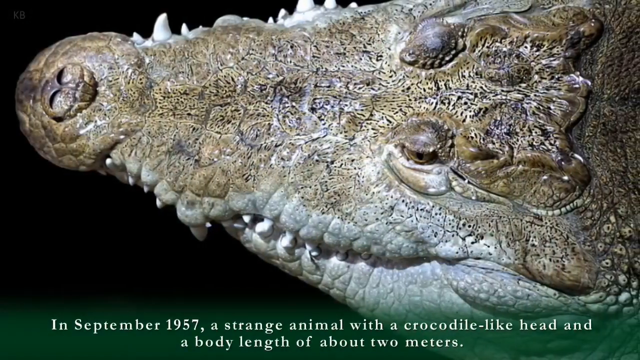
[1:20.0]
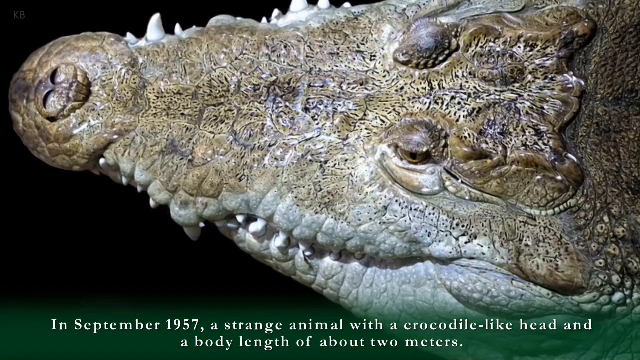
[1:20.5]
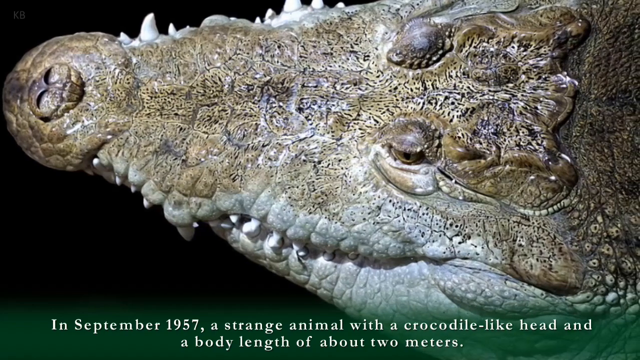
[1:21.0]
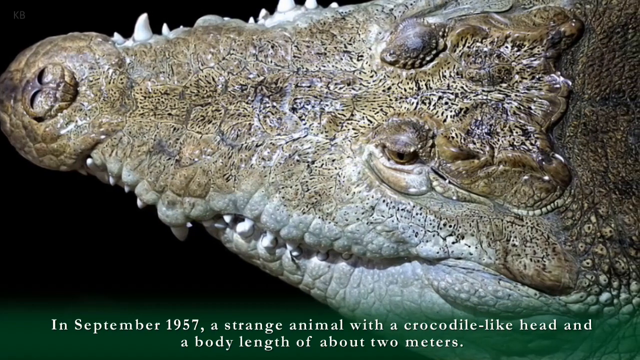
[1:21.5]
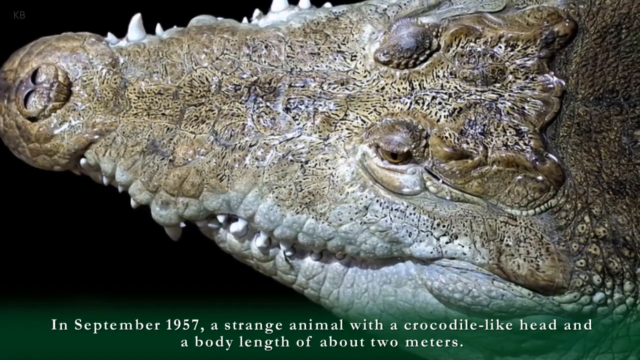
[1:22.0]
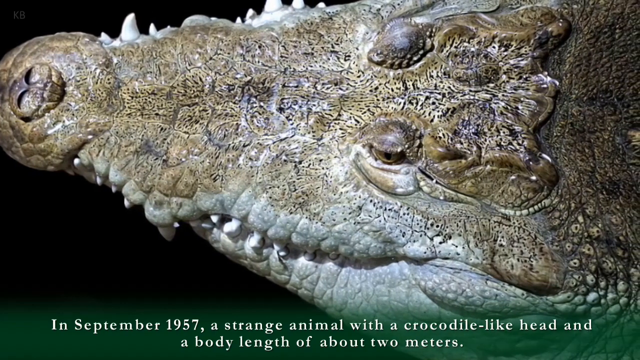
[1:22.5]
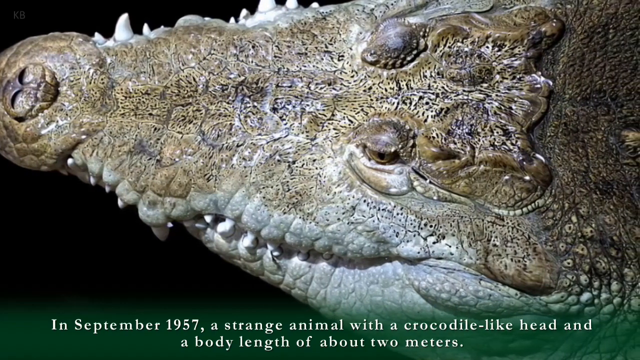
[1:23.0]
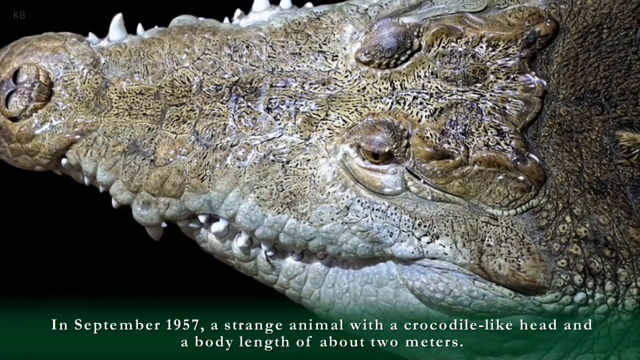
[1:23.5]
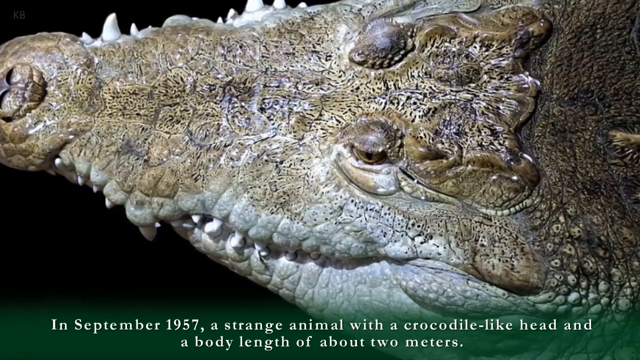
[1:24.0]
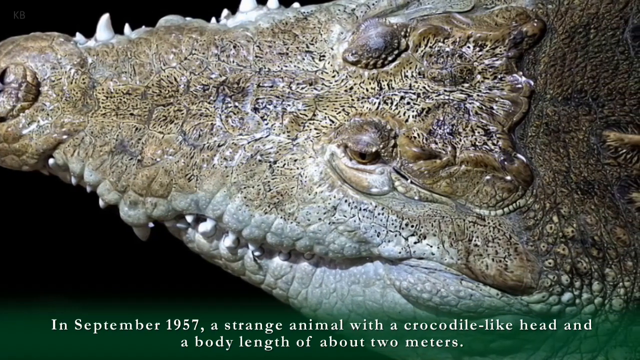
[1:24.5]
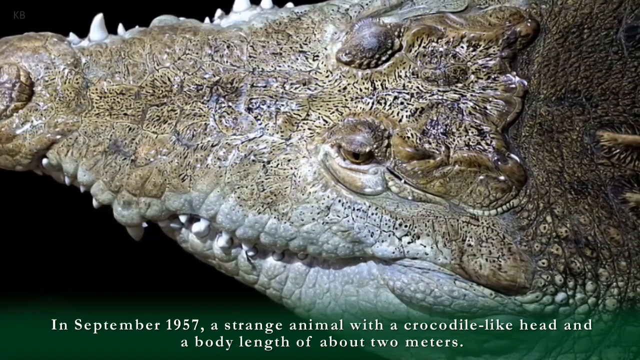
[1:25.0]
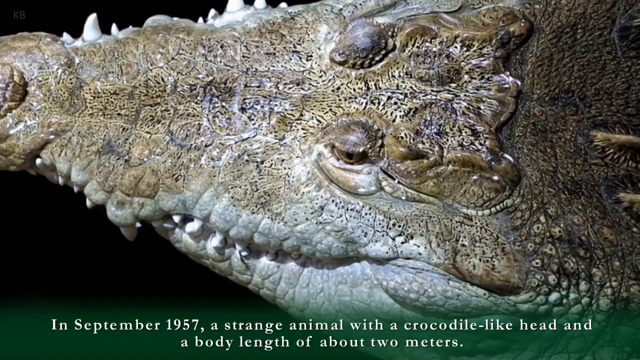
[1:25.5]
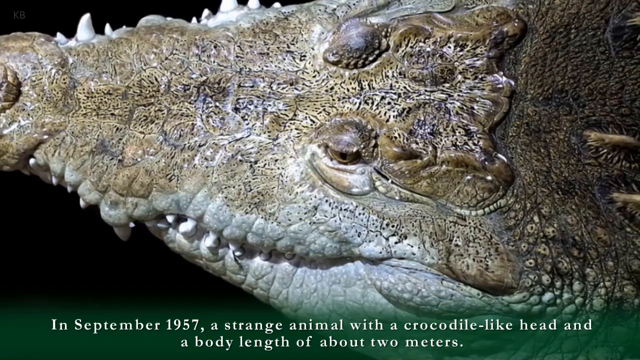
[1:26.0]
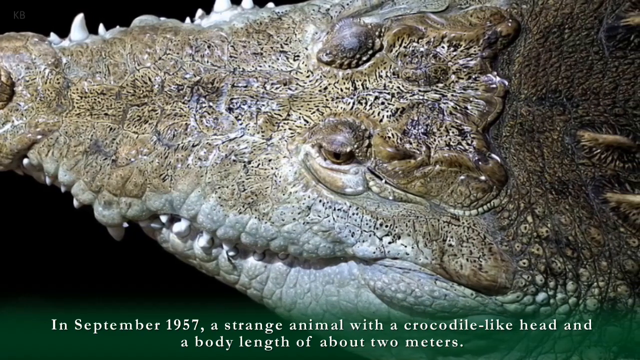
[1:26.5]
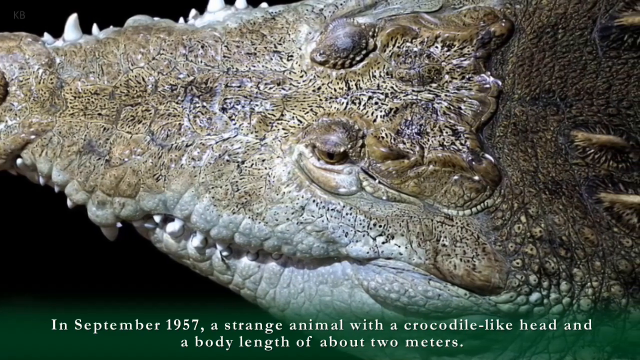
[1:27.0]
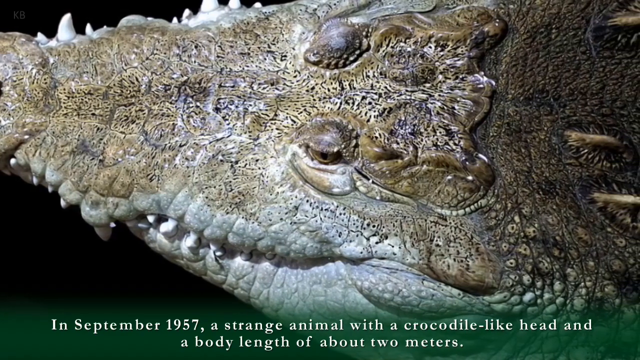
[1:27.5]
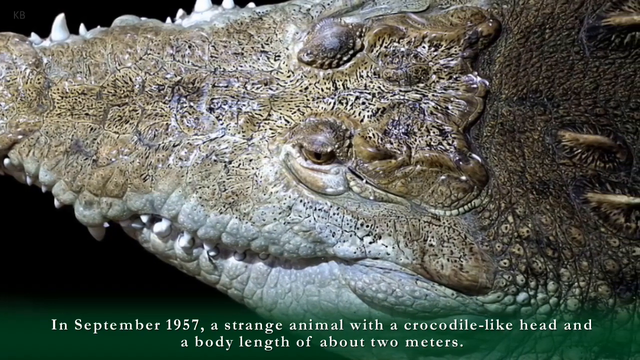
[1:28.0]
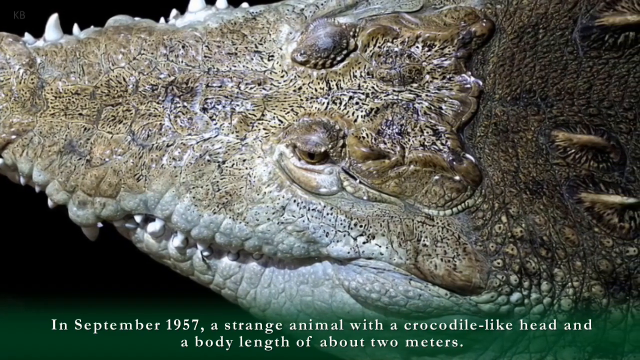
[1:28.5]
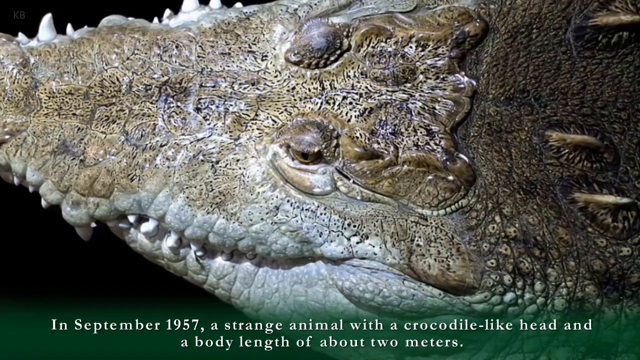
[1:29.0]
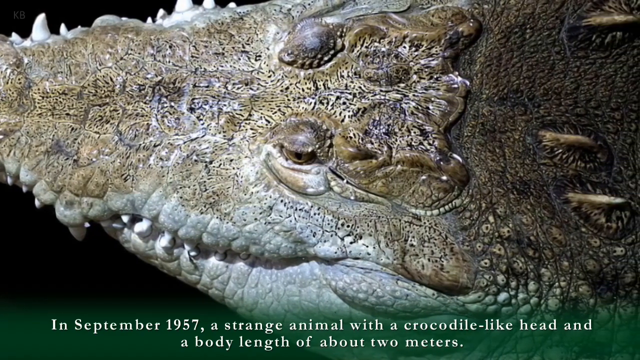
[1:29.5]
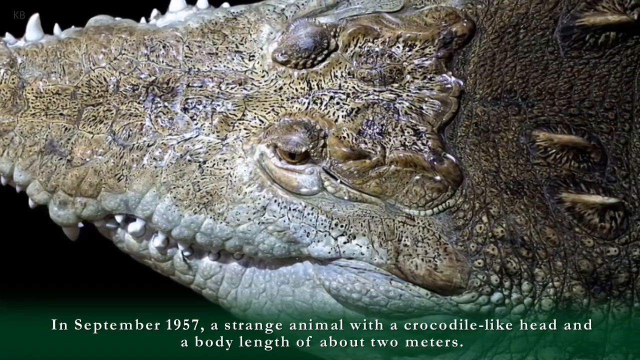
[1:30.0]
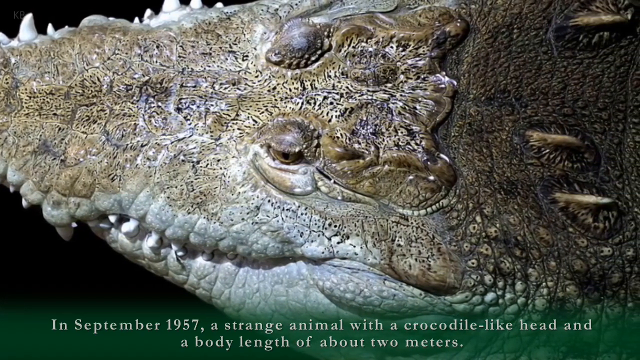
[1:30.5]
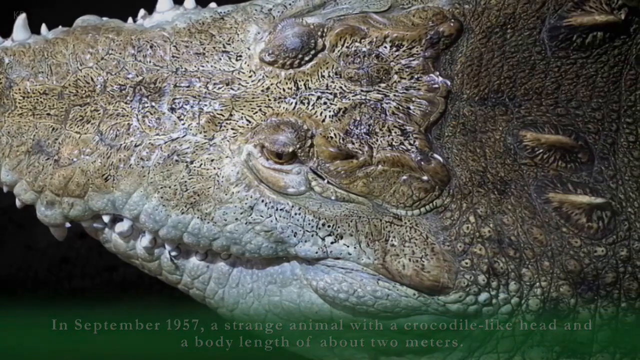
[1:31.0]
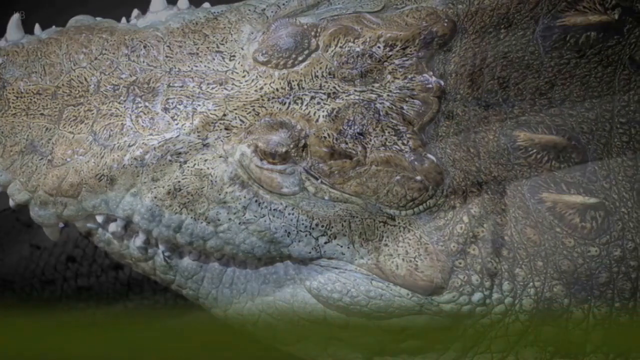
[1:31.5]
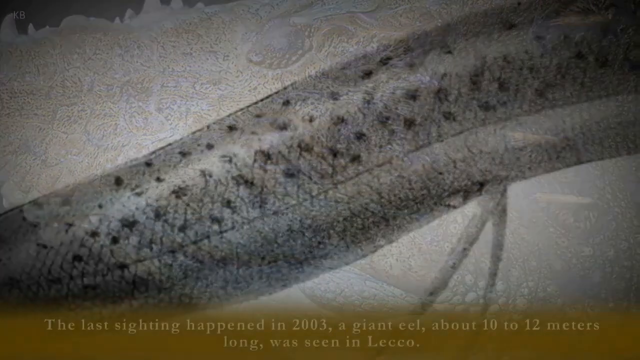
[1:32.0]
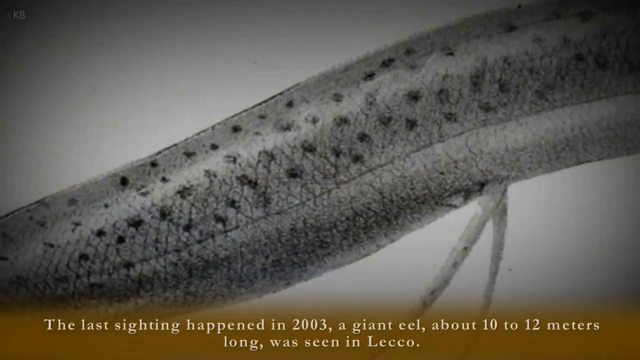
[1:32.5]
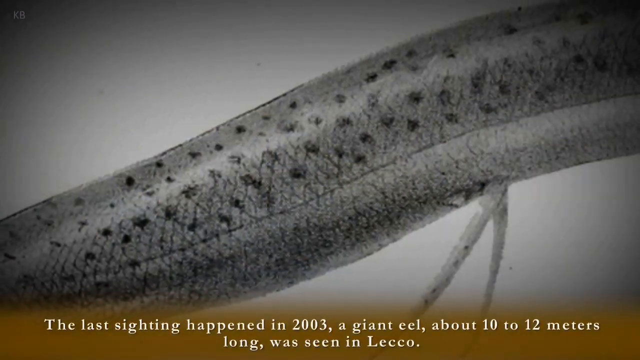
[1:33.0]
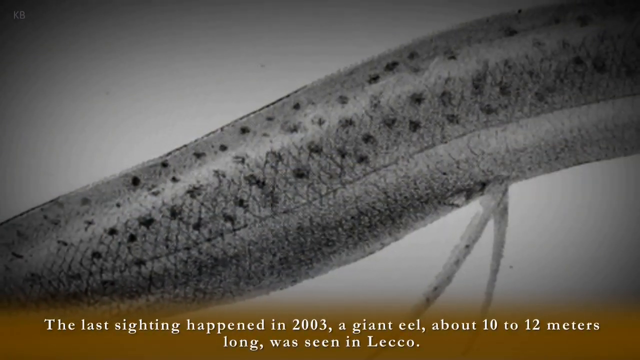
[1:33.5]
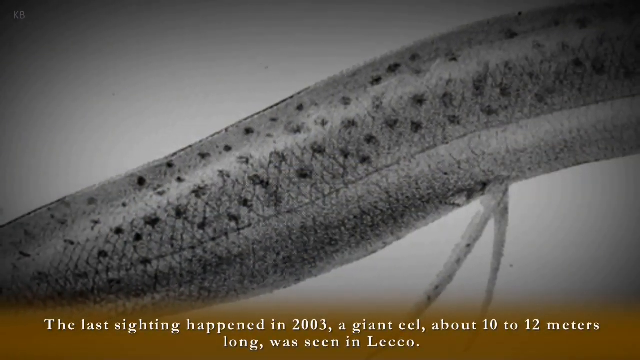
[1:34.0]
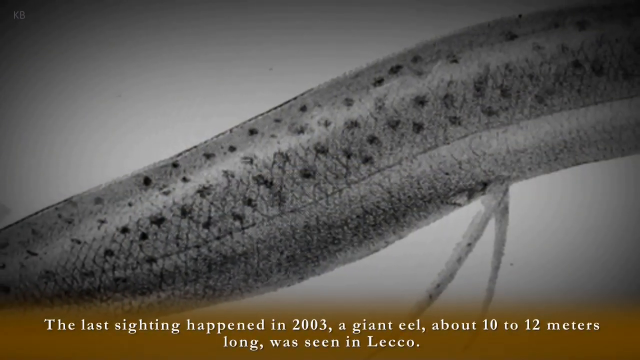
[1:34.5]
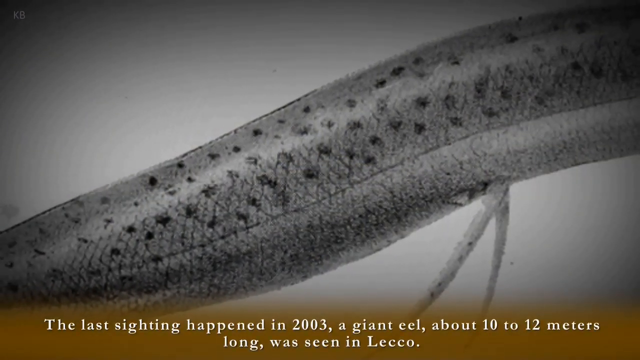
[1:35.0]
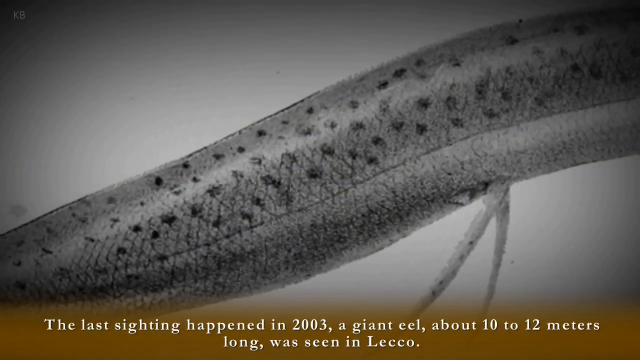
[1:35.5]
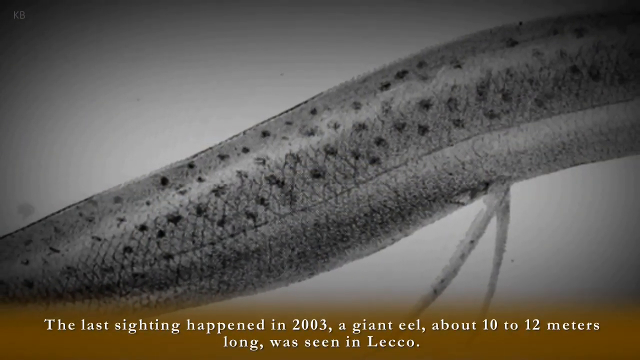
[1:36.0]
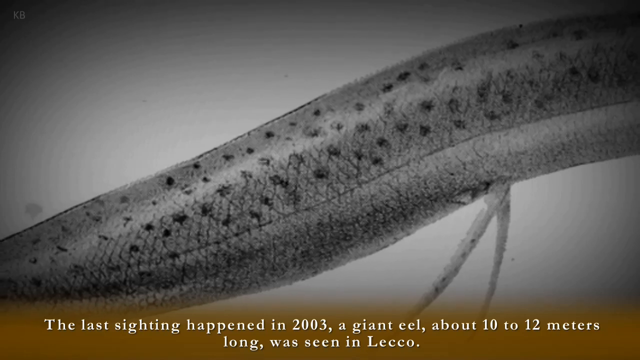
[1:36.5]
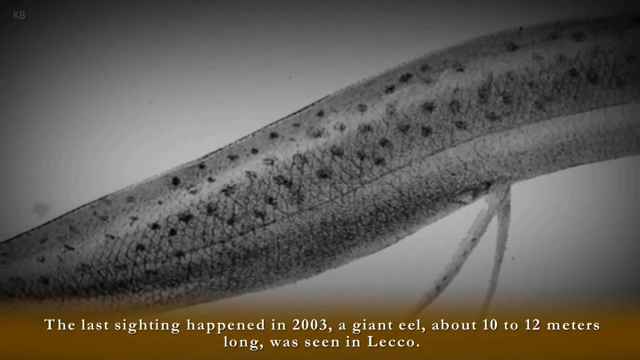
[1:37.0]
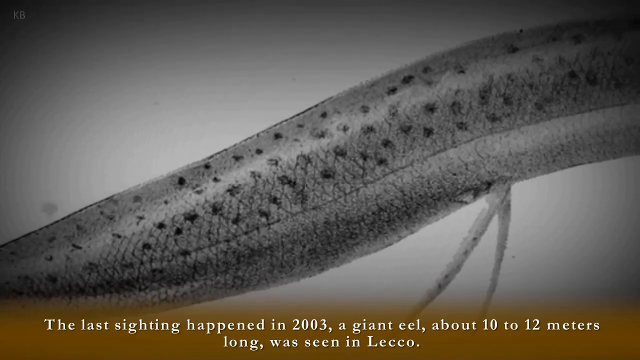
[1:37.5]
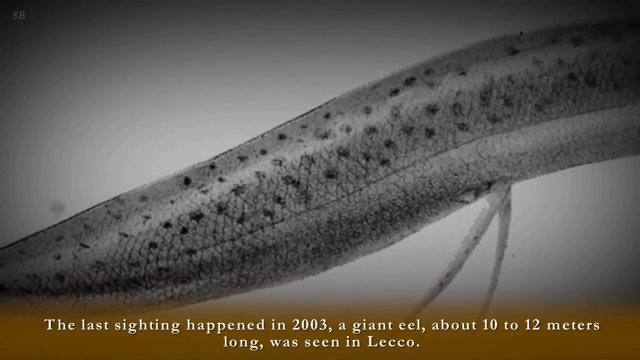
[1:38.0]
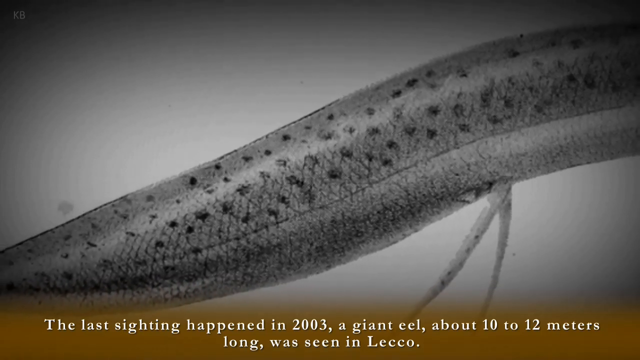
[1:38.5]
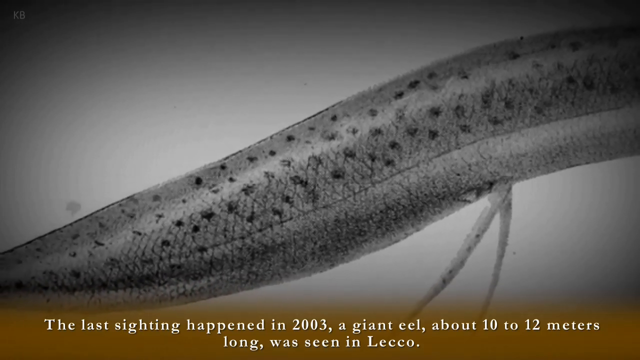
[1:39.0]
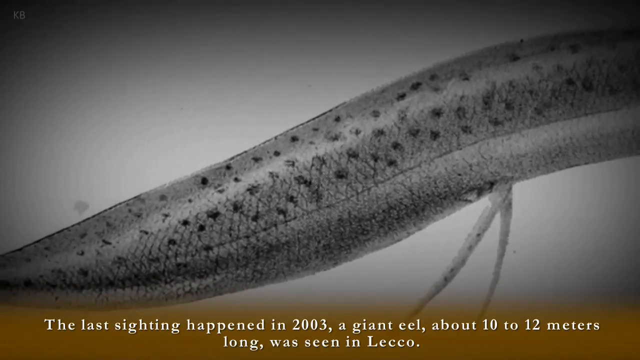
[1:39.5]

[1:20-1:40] Text states that in September 1957 an animal with a crocodile-like head and a body length of about 2 meters was seen in the water, and that "The last sighting happened in 2003," when something about 10 to 12 meters long was seen. A crocodile is shown passing by in the lake.